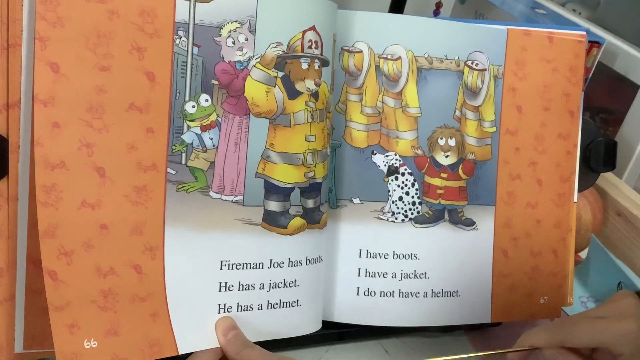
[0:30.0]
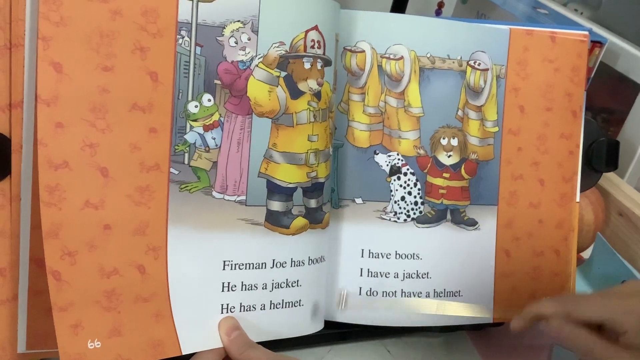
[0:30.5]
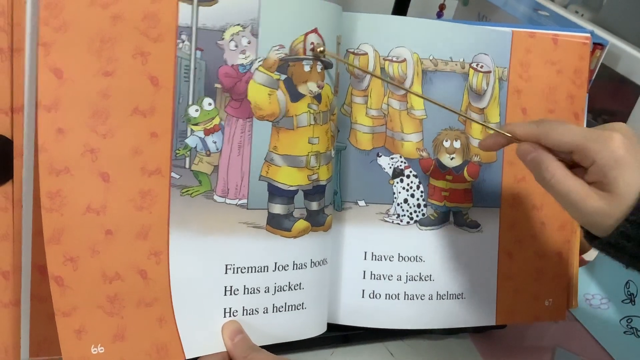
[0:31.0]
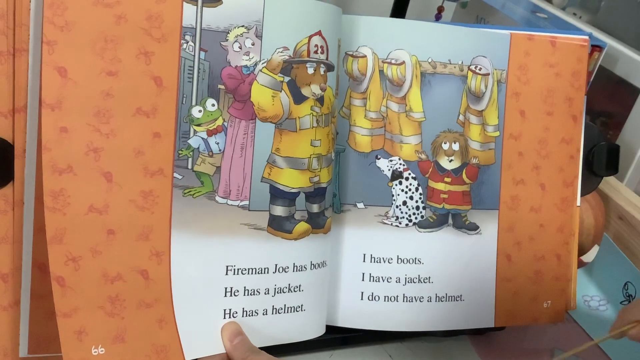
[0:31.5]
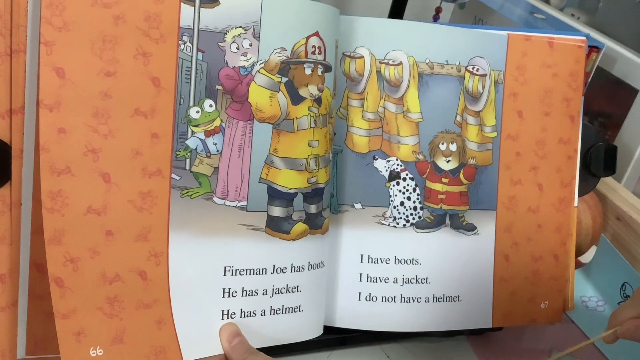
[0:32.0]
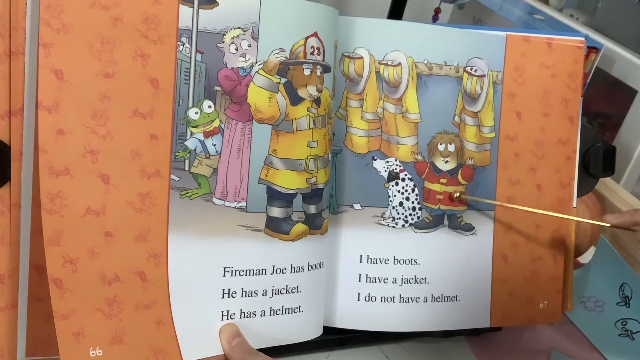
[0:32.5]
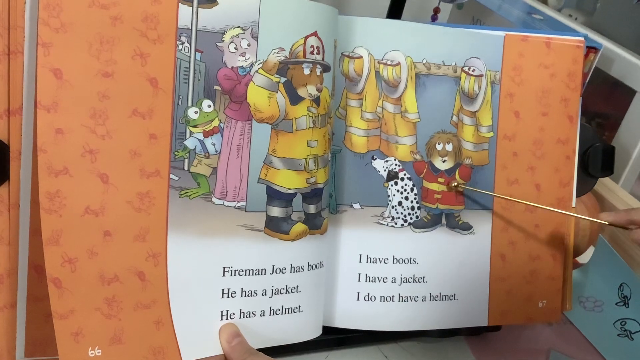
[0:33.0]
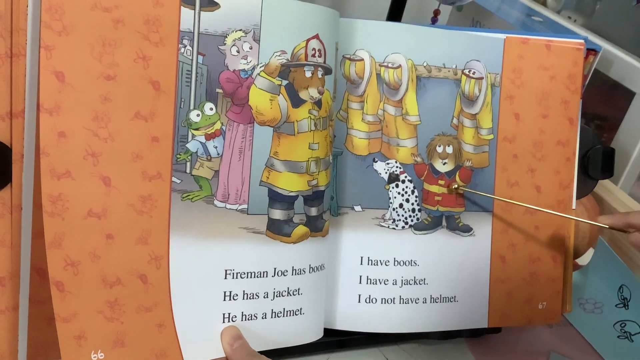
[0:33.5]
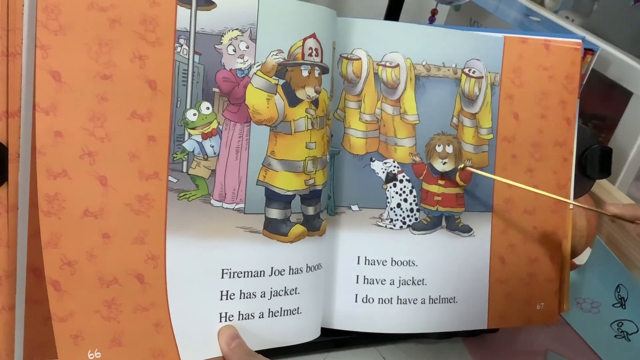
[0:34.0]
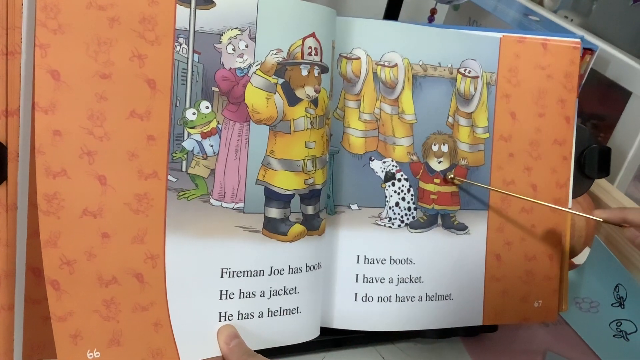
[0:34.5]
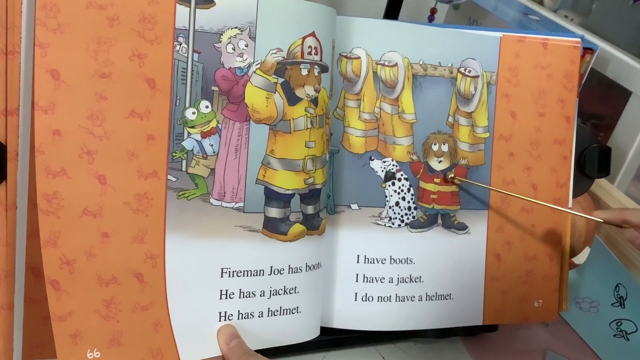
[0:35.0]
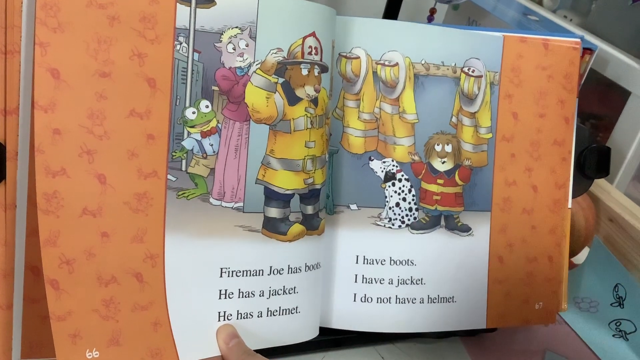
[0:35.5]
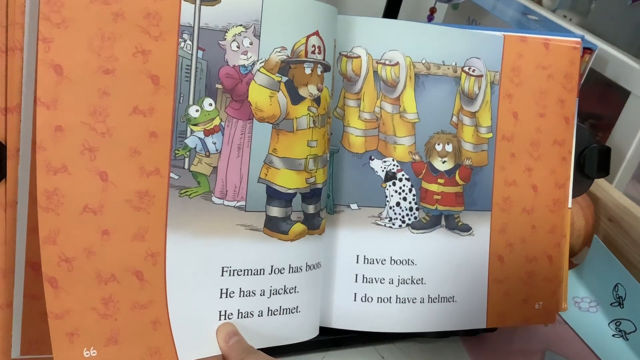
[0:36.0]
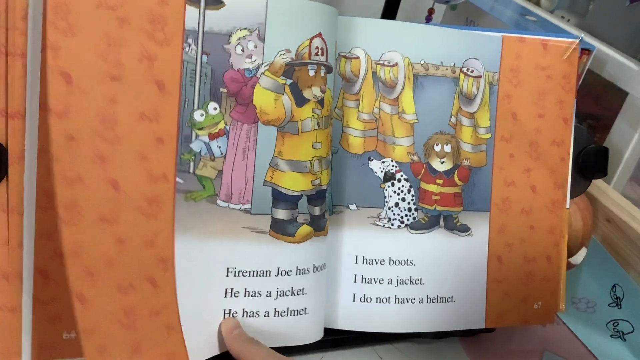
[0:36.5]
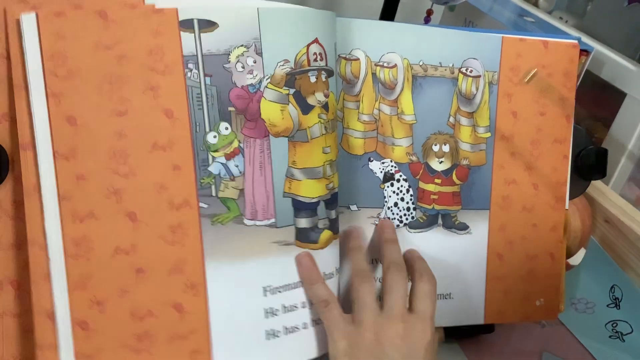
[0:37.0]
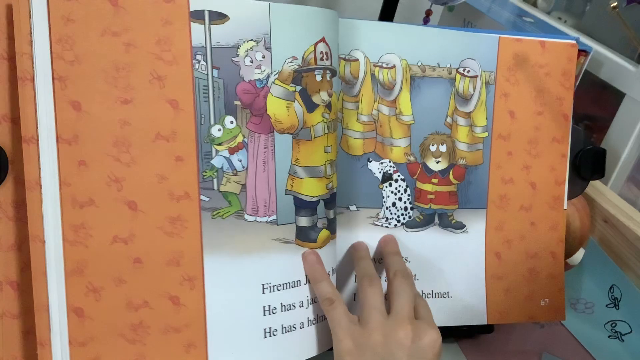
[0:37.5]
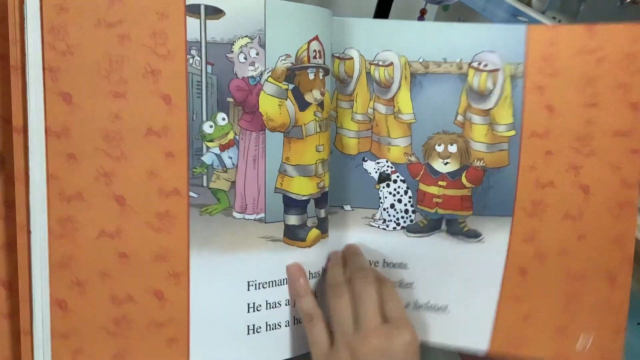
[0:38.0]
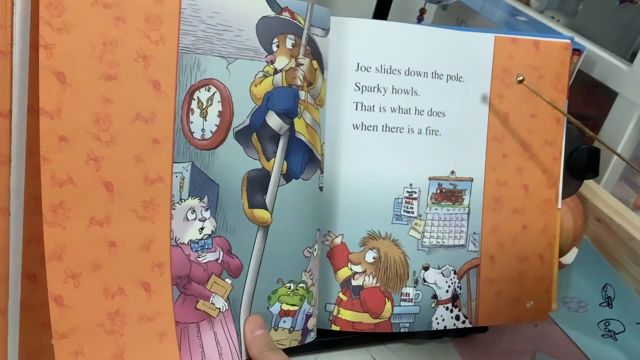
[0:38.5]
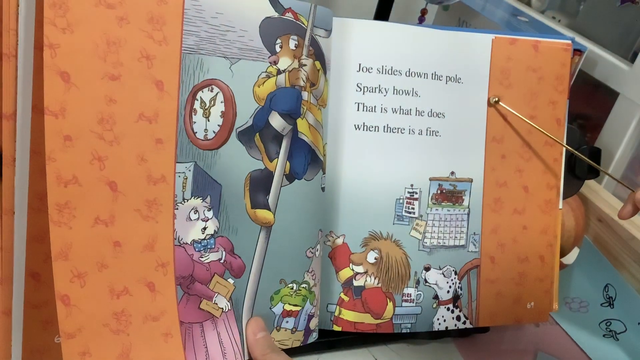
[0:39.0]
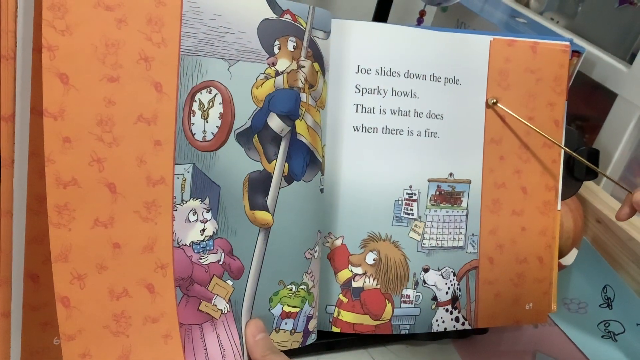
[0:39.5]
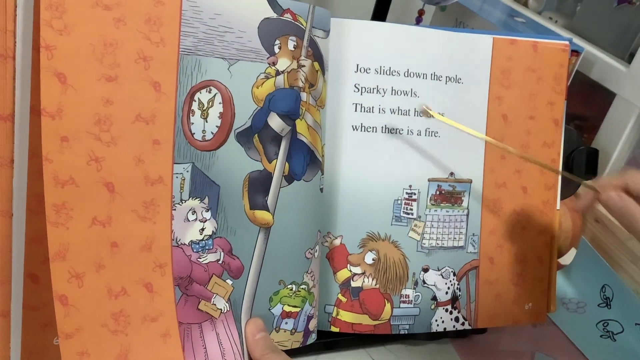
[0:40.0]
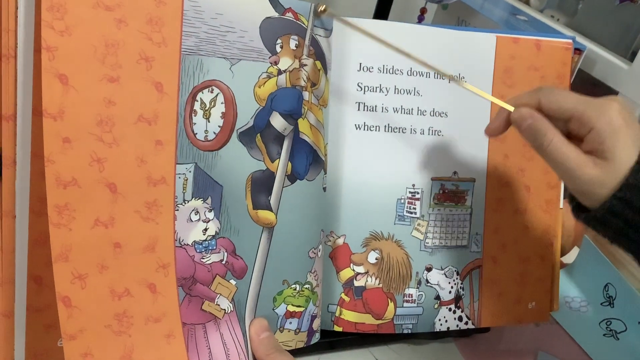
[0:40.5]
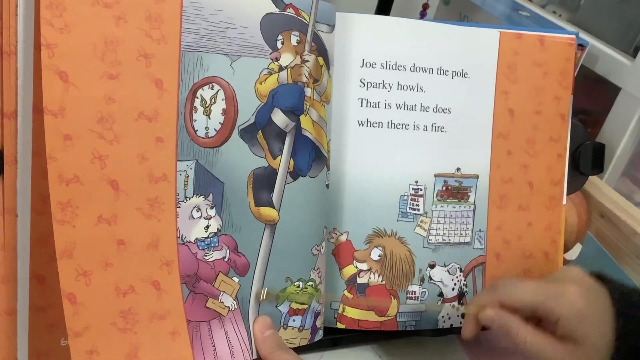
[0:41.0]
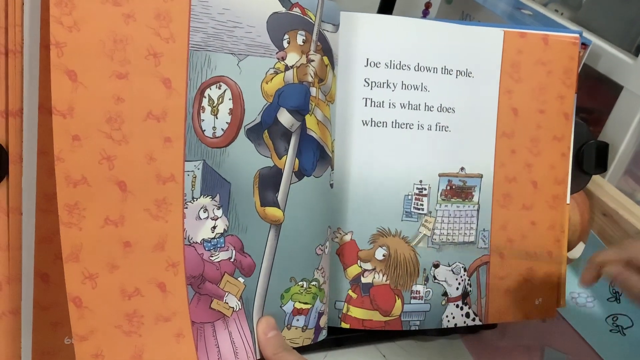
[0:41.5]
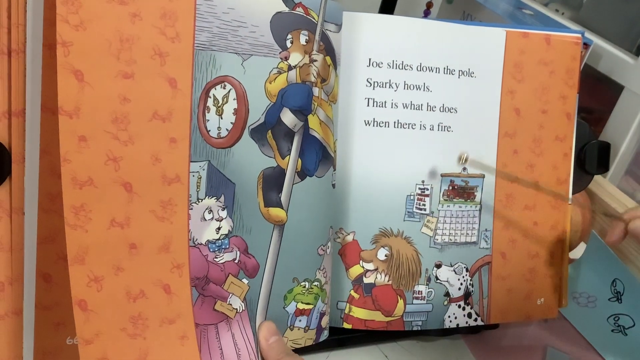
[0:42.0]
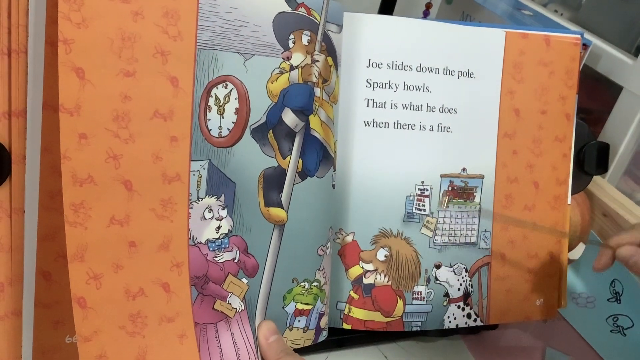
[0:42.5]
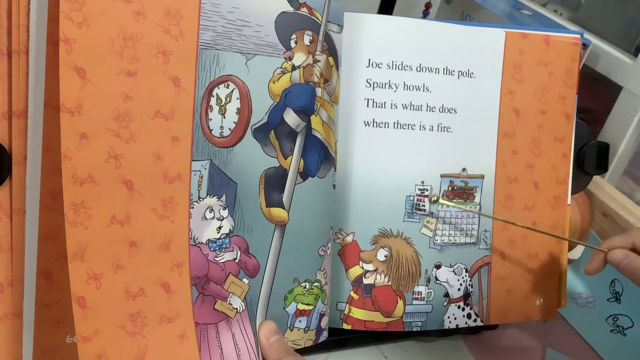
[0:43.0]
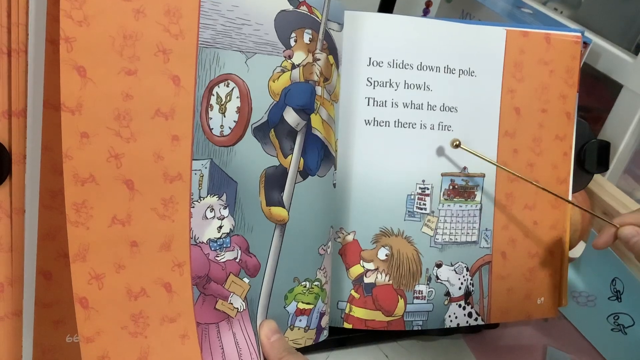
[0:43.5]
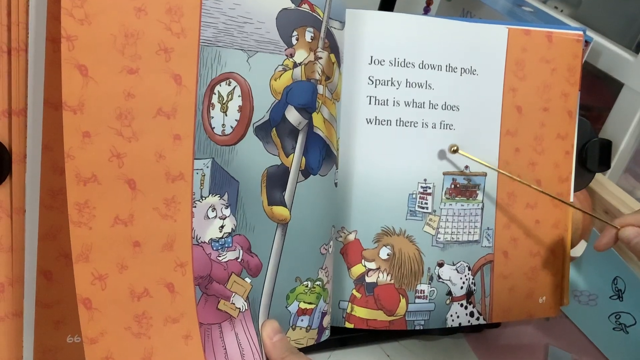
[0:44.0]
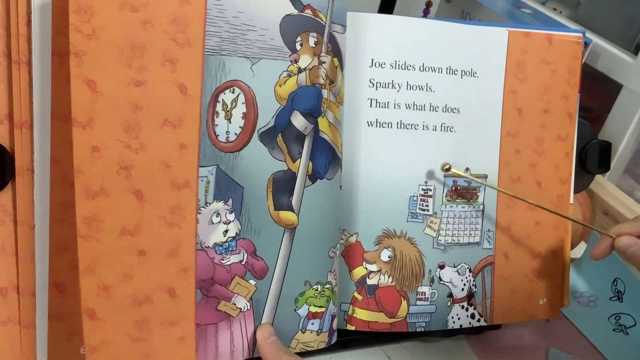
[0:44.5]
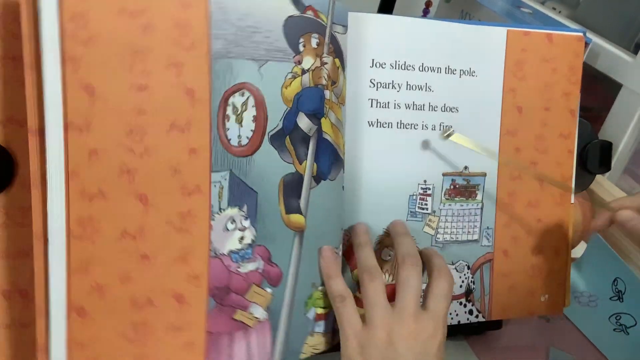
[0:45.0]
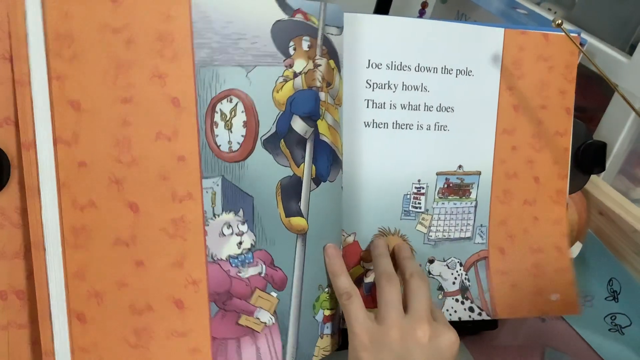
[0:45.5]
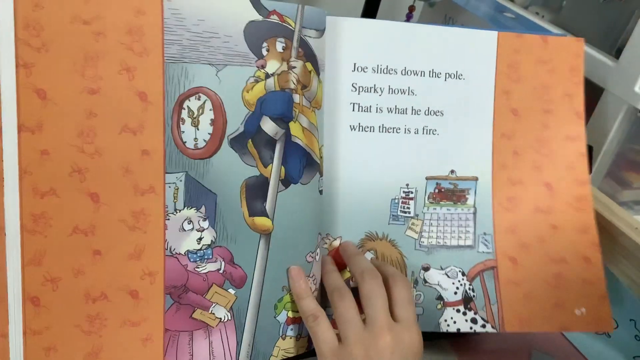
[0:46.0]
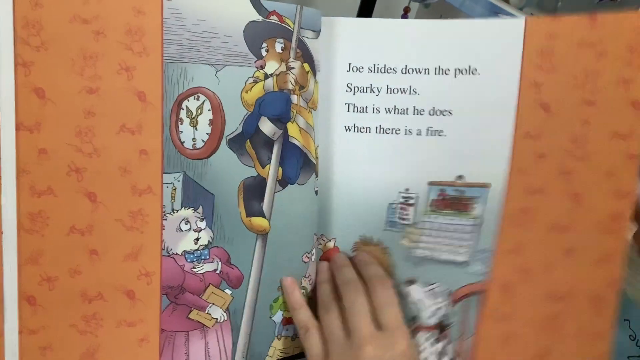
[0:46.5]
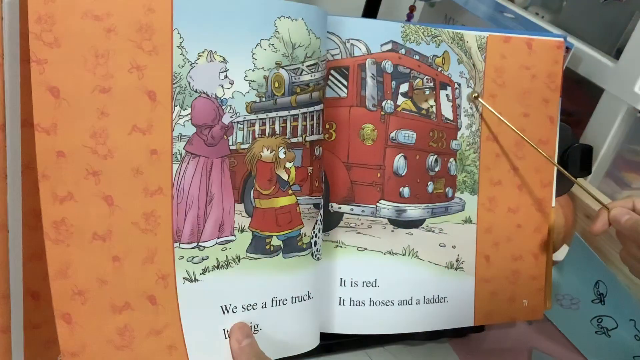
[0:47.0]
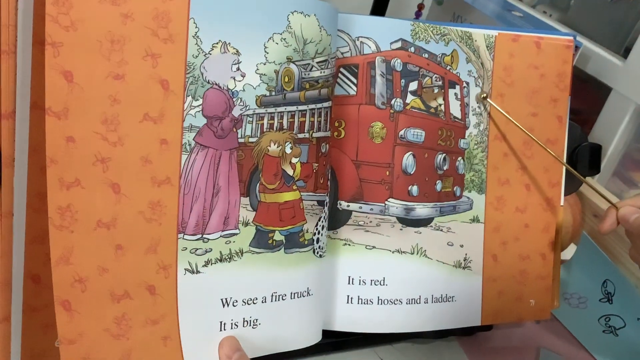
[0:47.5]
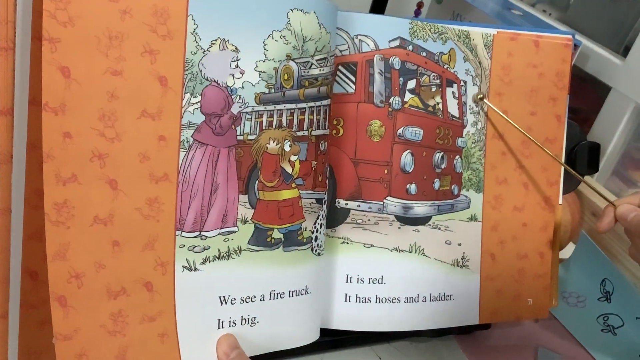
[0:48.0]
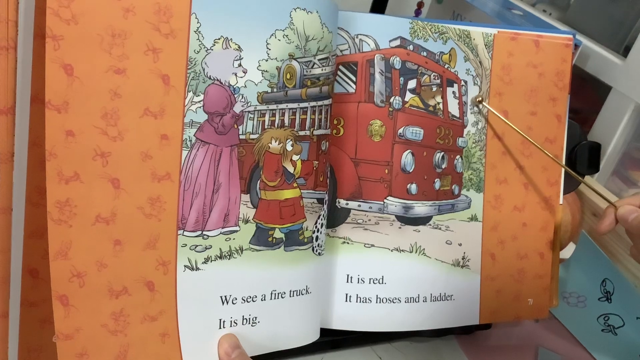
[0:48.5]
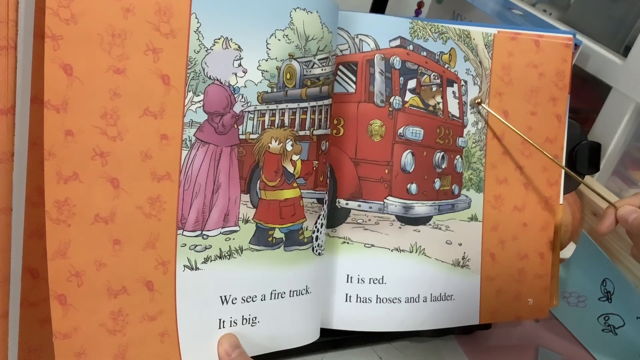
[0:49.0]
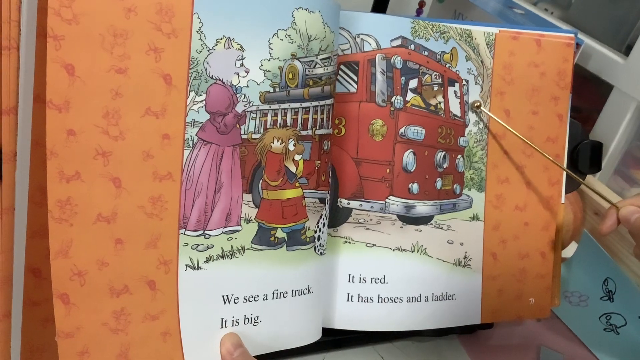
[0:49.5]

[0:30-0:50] The next room is an office with five people in it: the teacher, a cat wearing a dress; a bear in a fireman uniform; a boy dog in a fireman uniform; a frog child in a child's uniform; and a Dalmatian. The bear is coming down a fireman pole, and the words on the screen say, "Joe slides down the pole, Sparky howls, that is what he does when there is a fire." There is a calendar in the room, a clock on the wall and a filing cabinet. They all seem to be admiring the fireman as he shows off the fireman pole. On the next page the setting changes to the outside, with three characters: the cat teacher, the dog boy and the bear fireman, who is sat in a fire engine.